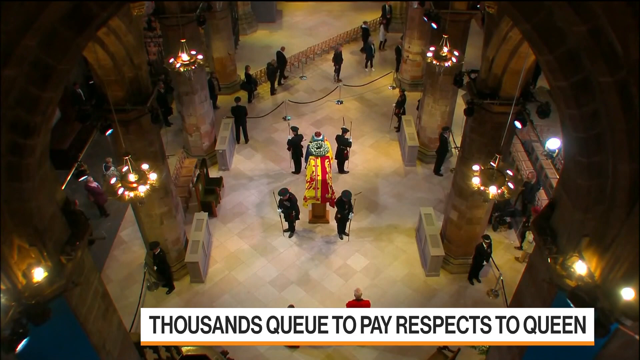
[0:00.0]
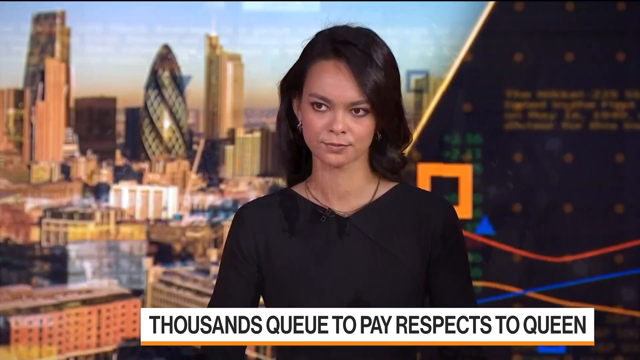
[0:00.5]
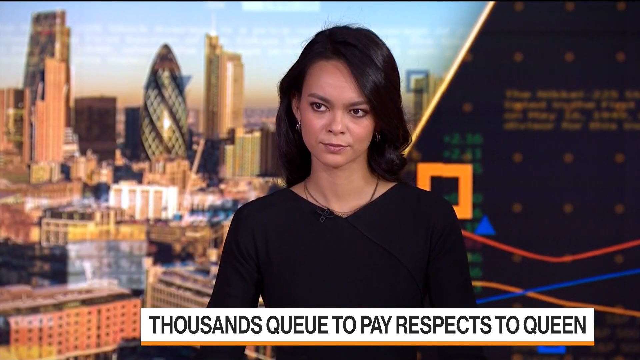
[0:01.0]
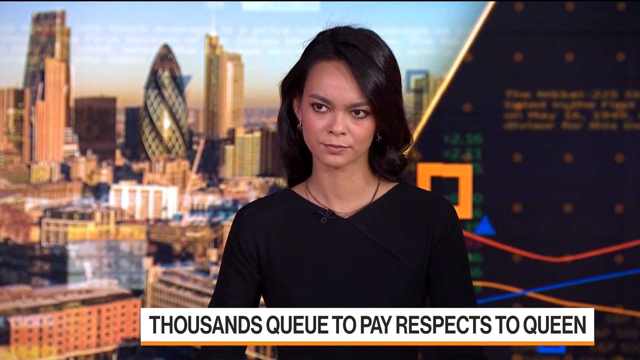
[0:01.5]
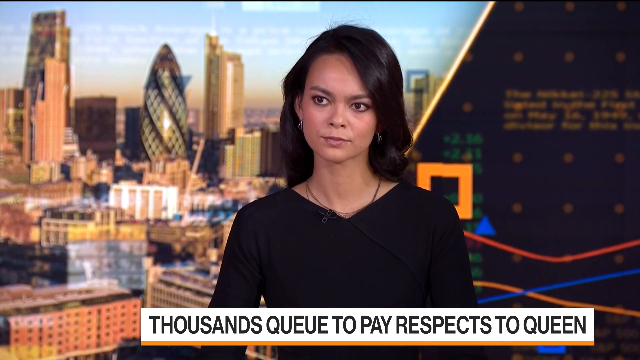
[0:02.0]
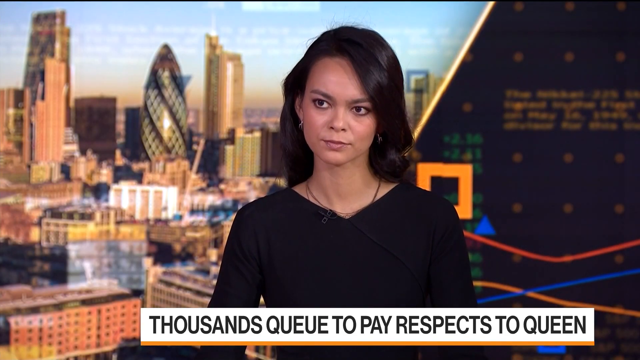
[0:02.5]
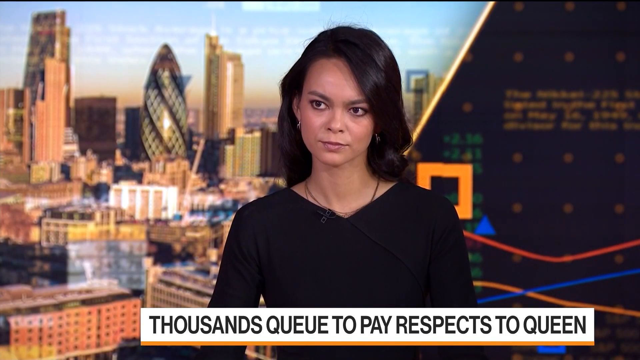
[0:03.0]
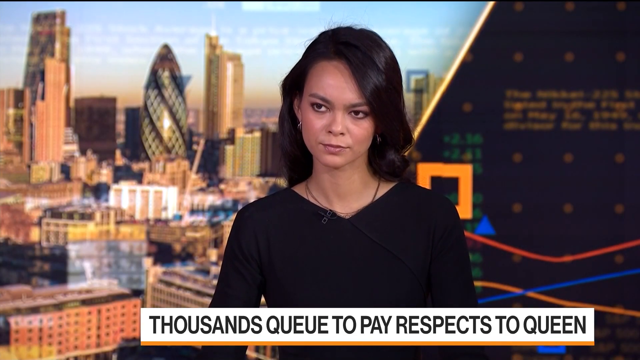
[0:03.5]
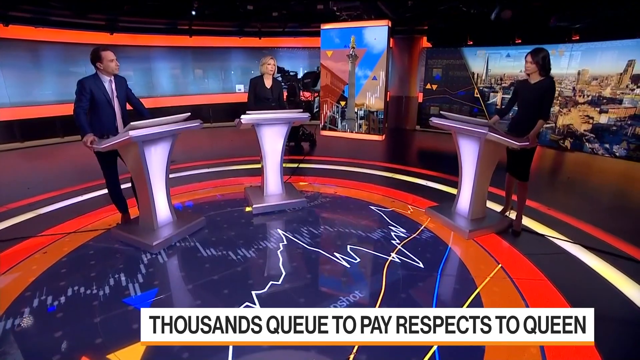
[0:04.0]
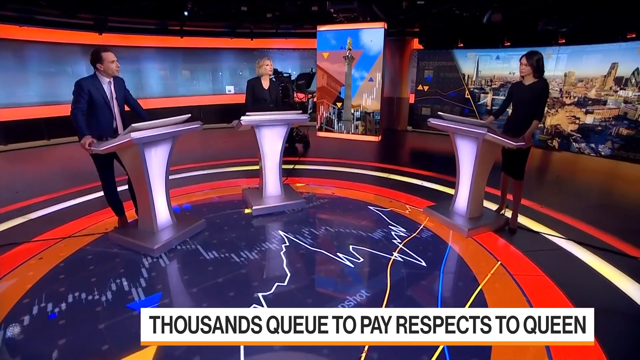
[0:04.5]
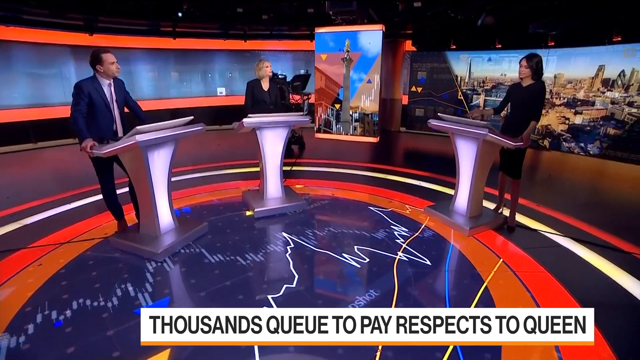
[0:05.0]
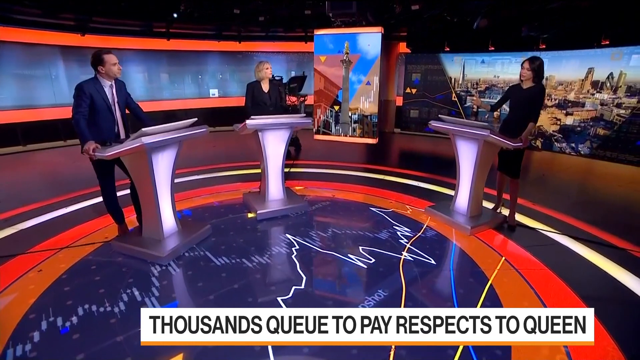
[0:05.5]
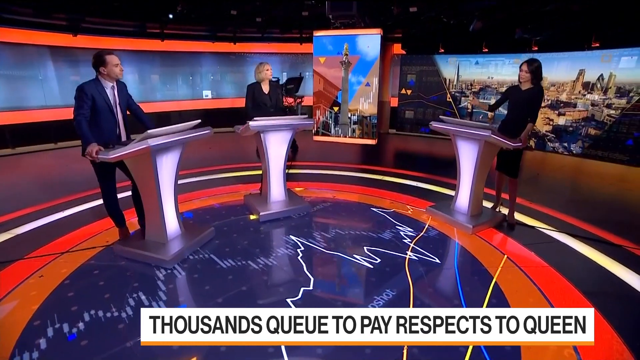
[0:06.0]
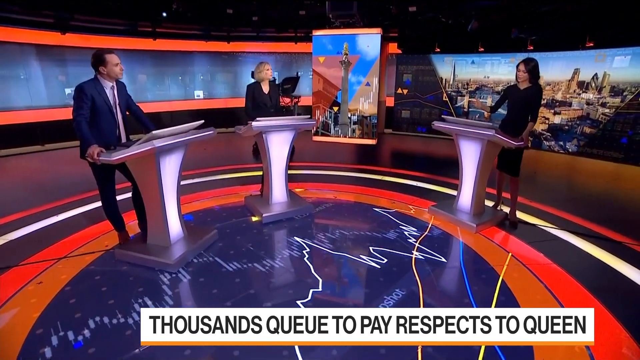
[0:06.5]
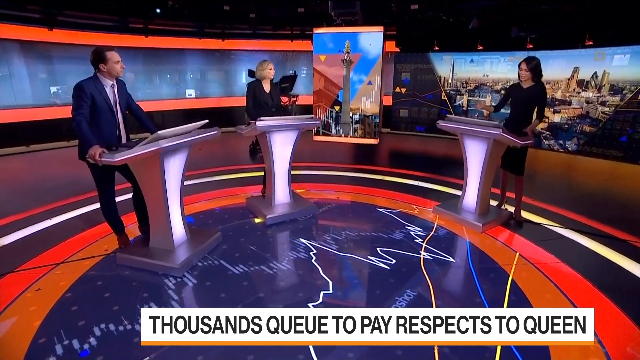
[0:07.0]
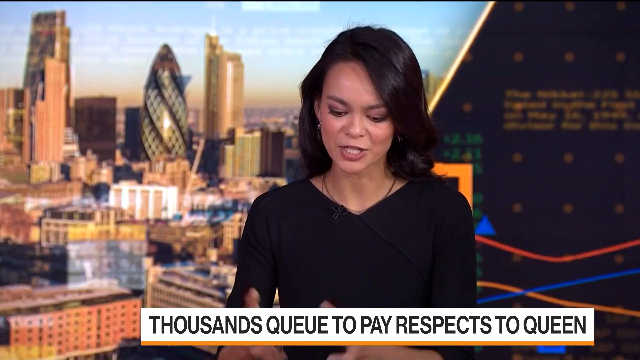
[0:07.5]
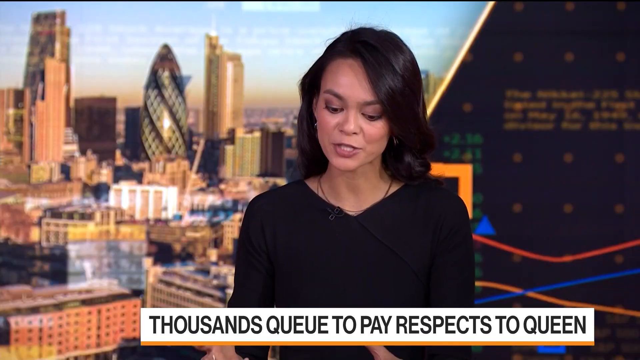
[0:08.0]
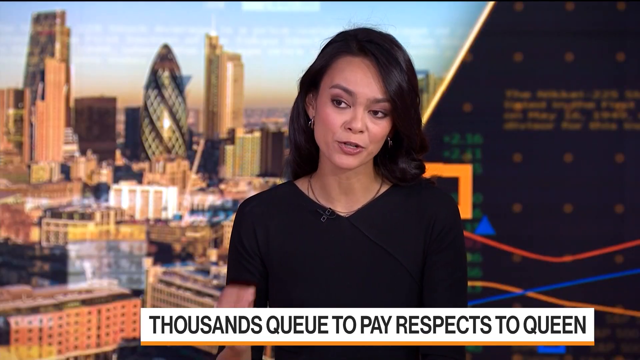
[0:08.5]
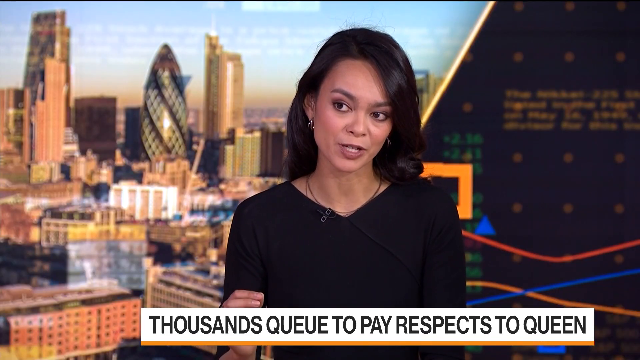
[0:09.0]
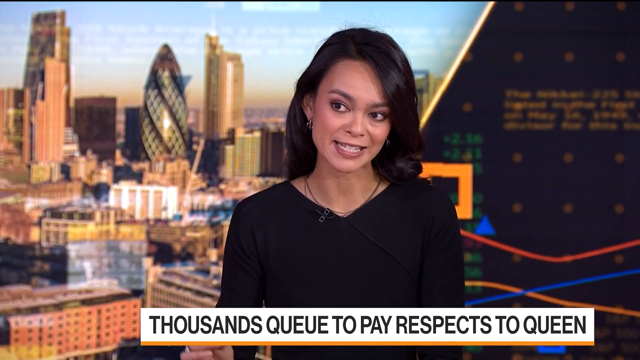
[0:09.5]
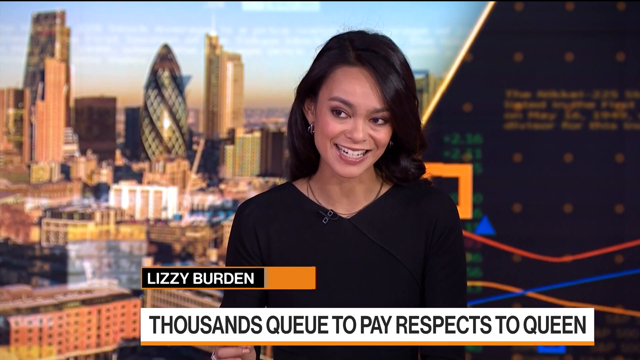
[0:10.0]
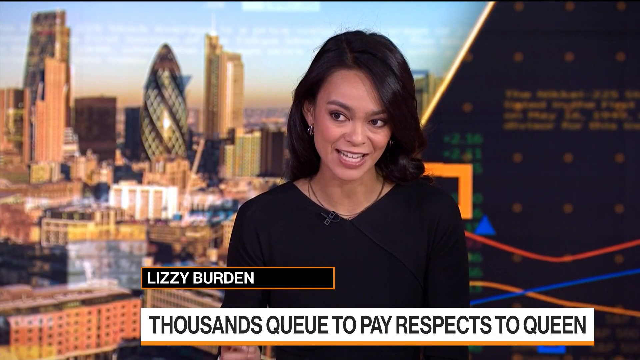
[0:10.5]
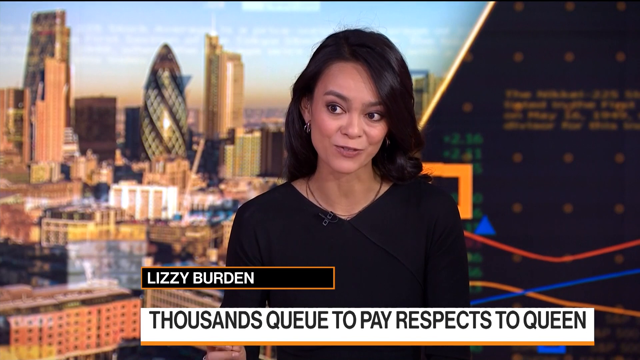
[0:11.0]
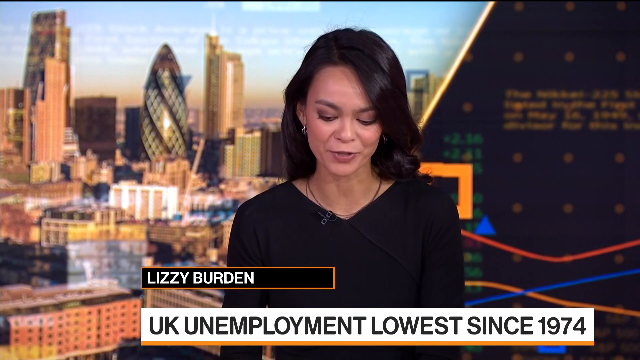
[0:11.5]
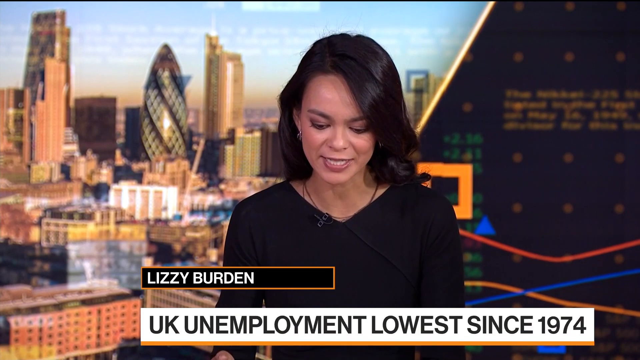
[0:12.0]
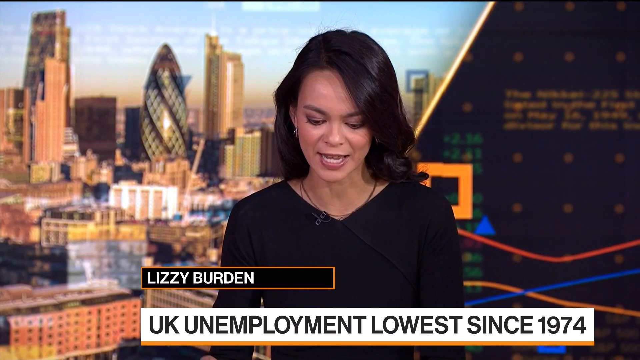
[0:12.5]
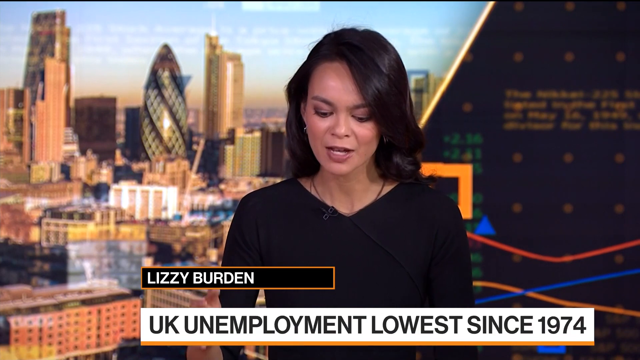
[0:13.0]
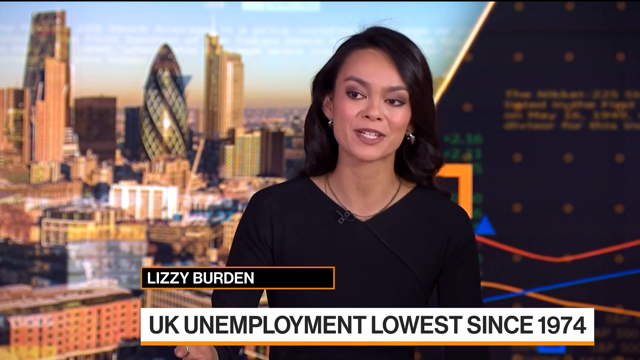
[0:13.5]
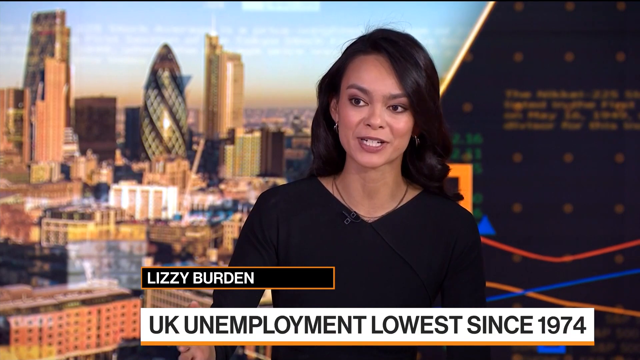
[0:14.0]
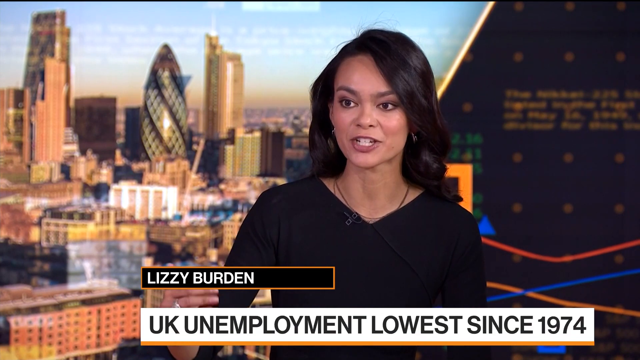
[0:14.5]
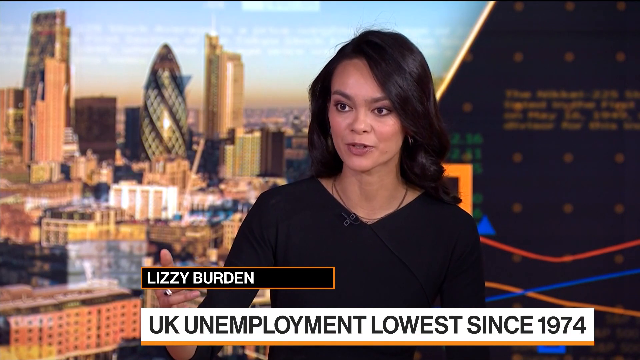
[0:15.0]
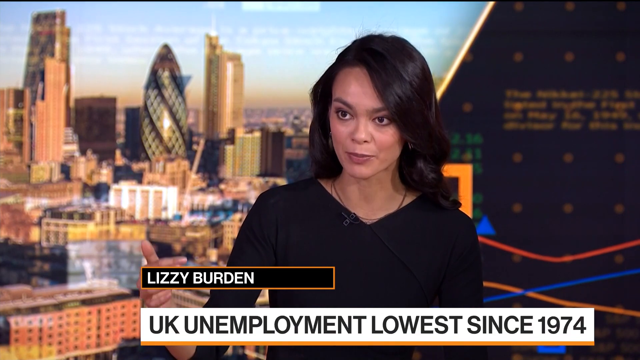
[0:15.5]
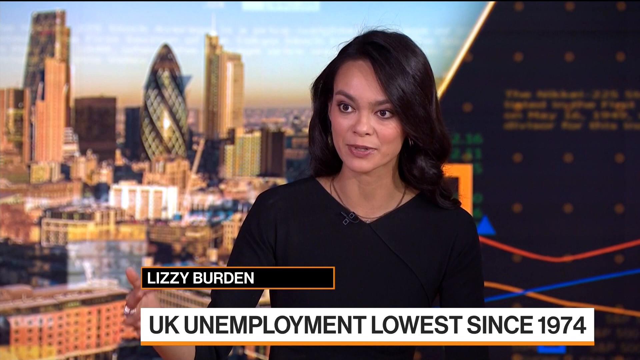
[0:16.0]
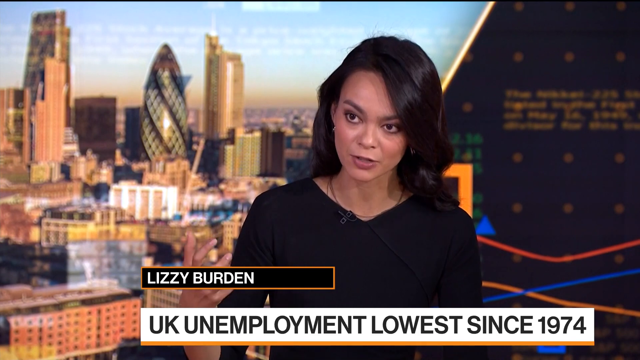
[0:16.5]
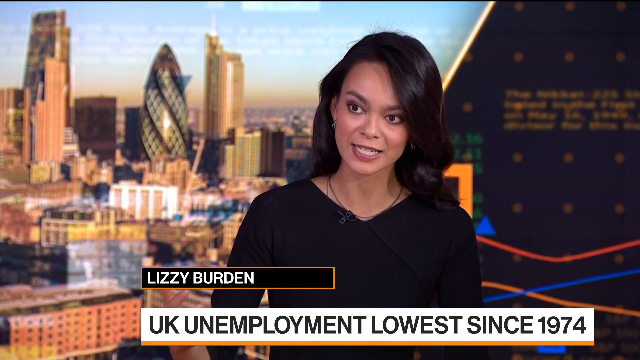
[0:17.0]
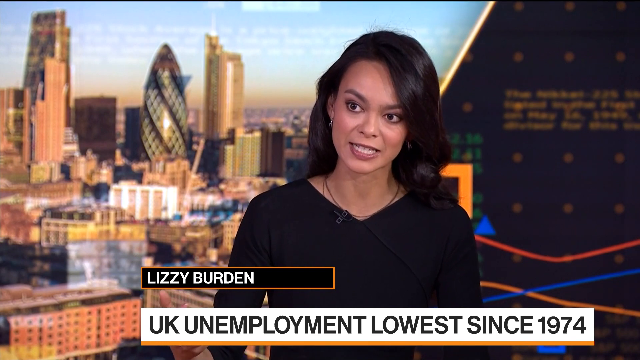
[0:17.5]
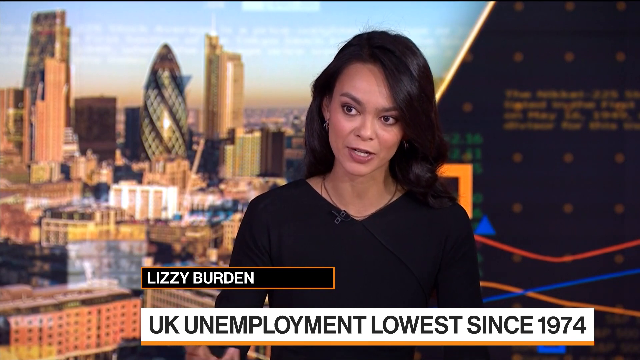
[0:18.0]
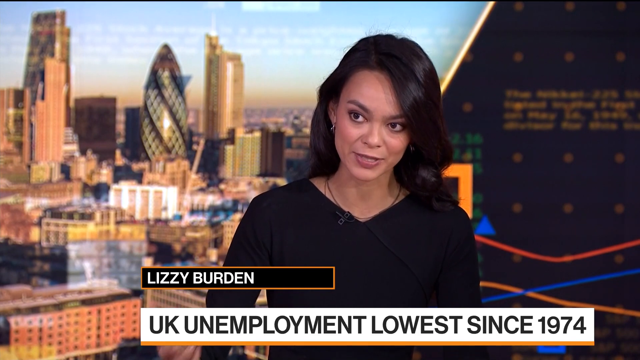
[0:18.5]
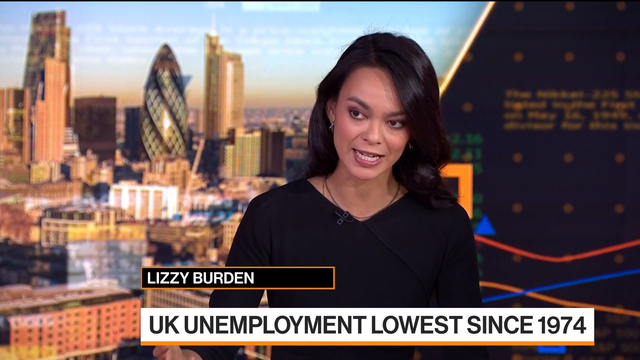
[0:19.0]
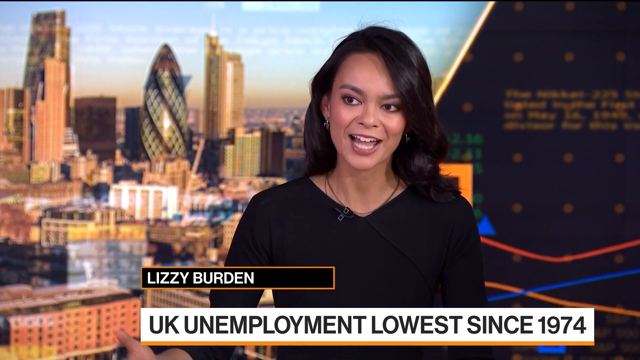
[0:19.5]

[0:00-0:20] The video appears to be from Bloomberg News, judging by the design of the text boxes and parts of the background, and Lizzie Burden is on the set. It opens with an overhead view of the Queen's coffin on display in an abbey or cathedral, indicating that thousands had gathered to pay respects to the Queen. Guards are standing around the coffin, and people are standing outside some ropes. The video then cuts to a studio showing a couple of people talking in what looks like a panel, standing behind podium-type desks, with Lizzie Burden talking and the text "UK unemployment lowest since 1974" on screen.